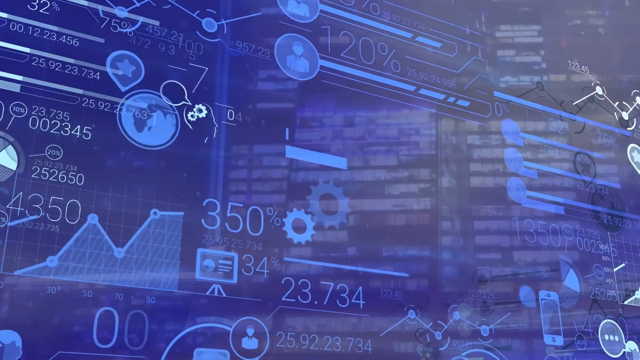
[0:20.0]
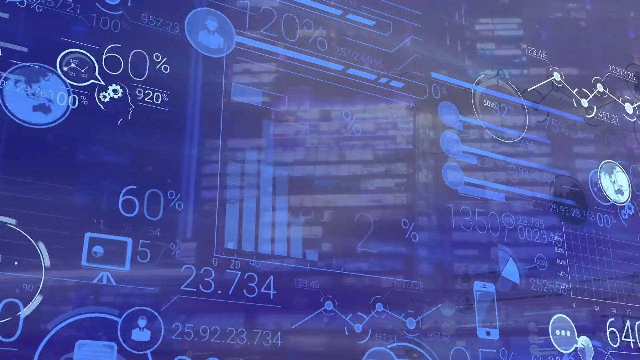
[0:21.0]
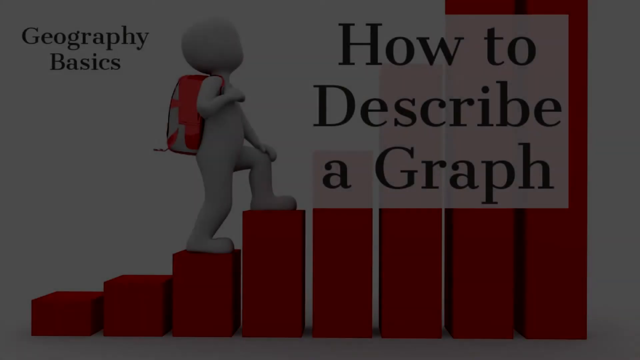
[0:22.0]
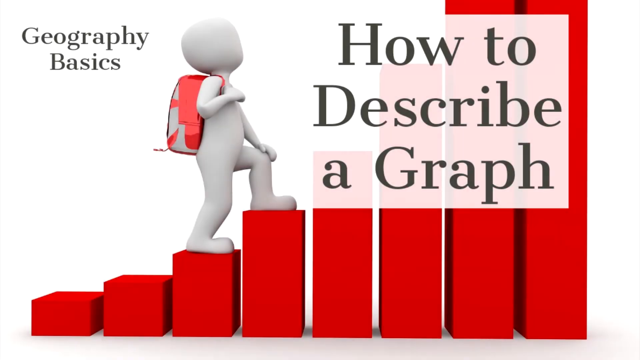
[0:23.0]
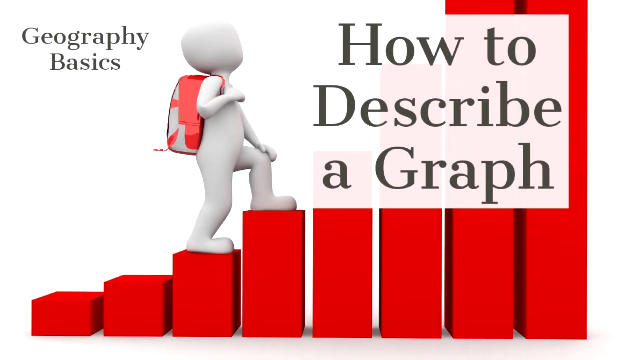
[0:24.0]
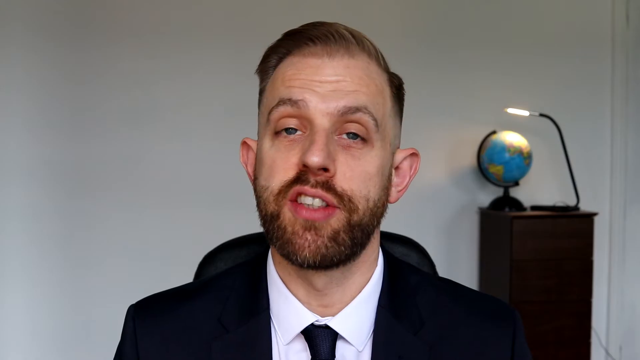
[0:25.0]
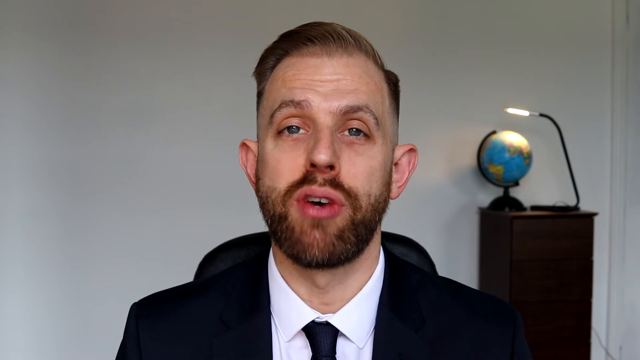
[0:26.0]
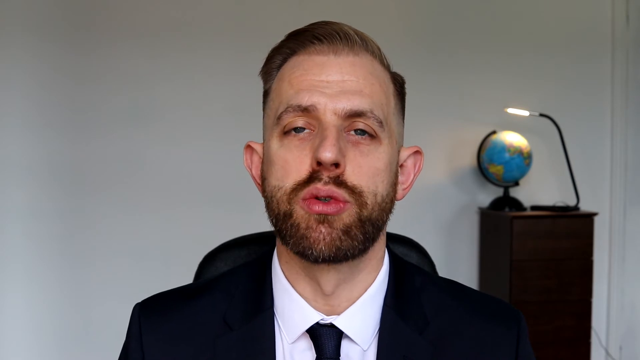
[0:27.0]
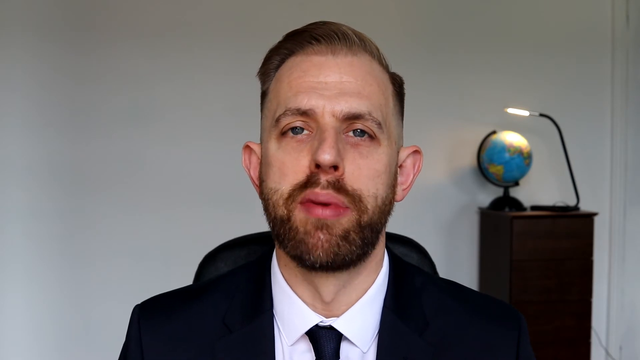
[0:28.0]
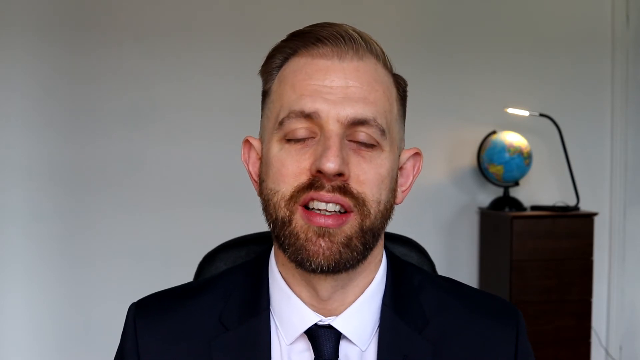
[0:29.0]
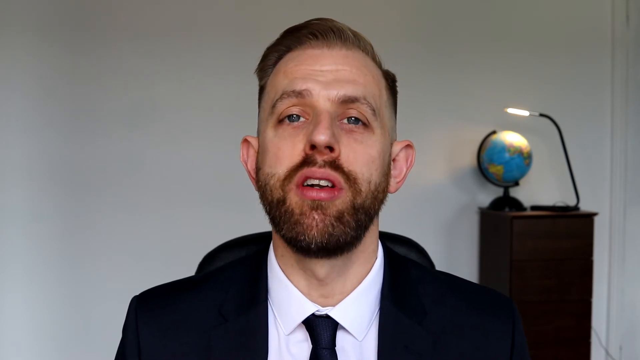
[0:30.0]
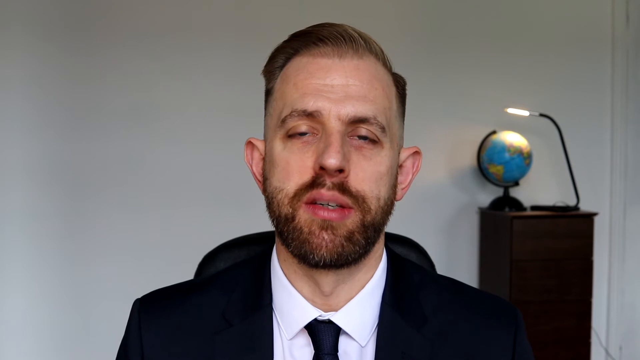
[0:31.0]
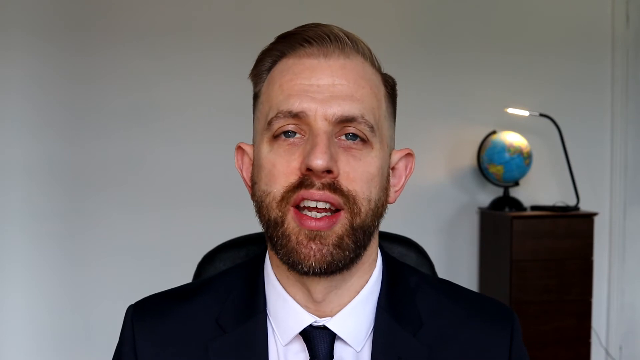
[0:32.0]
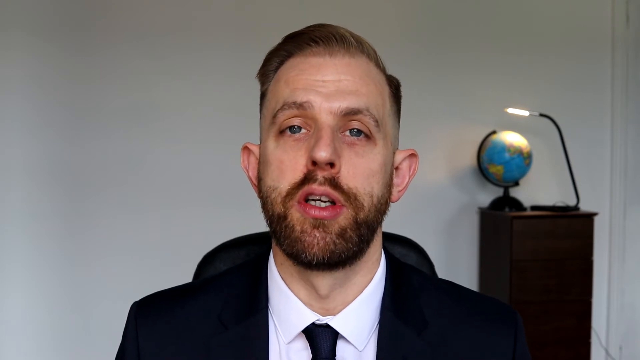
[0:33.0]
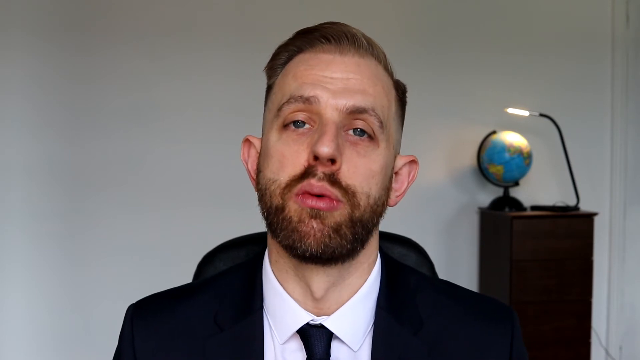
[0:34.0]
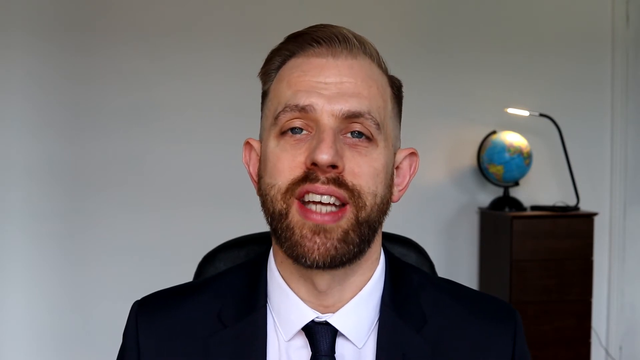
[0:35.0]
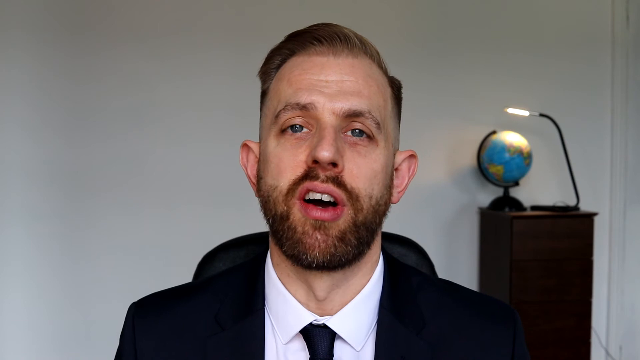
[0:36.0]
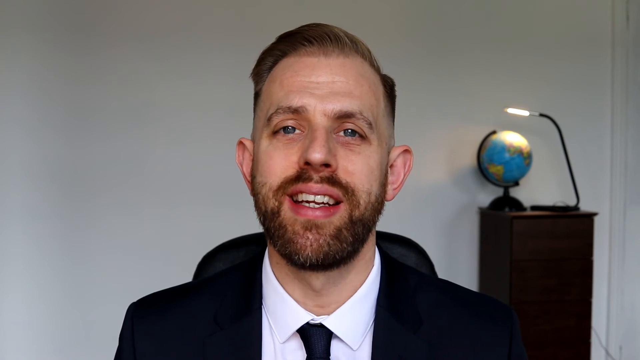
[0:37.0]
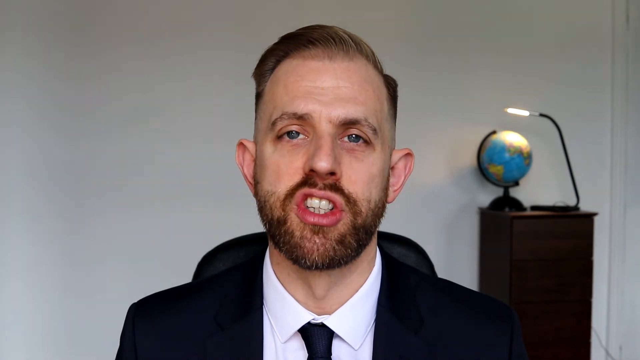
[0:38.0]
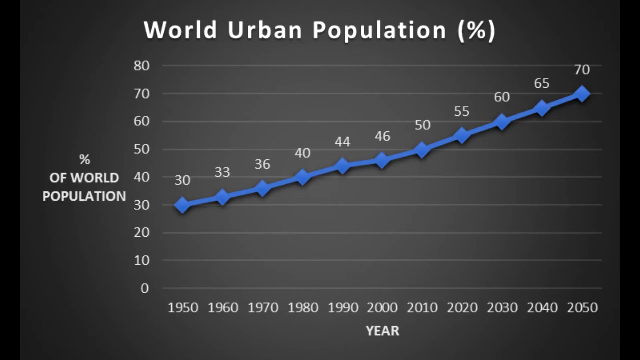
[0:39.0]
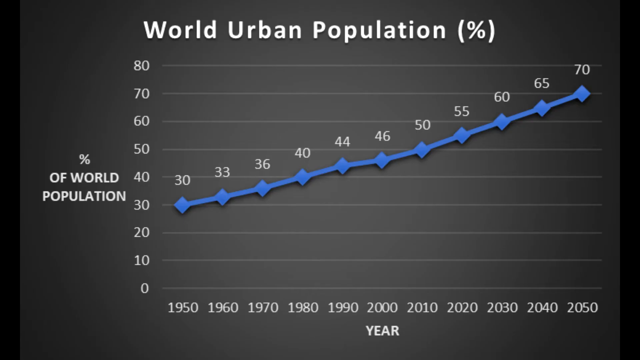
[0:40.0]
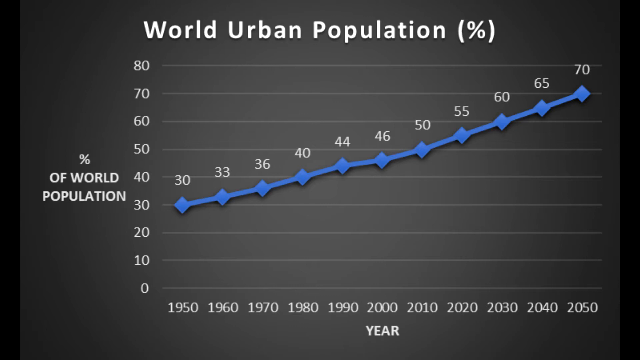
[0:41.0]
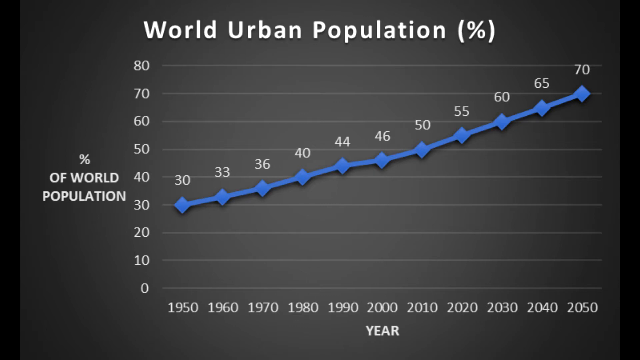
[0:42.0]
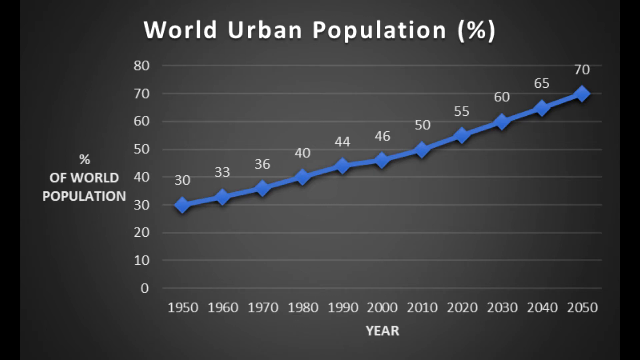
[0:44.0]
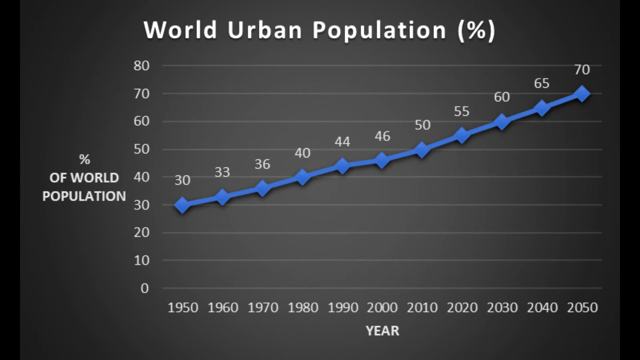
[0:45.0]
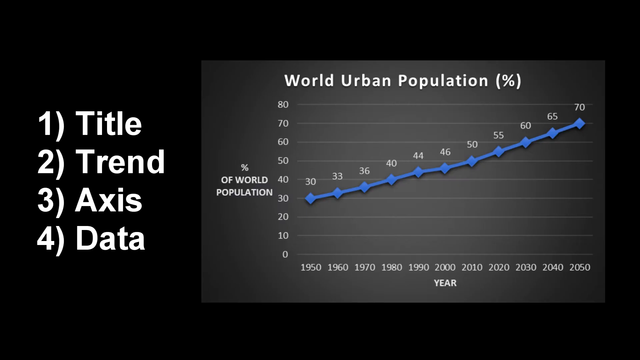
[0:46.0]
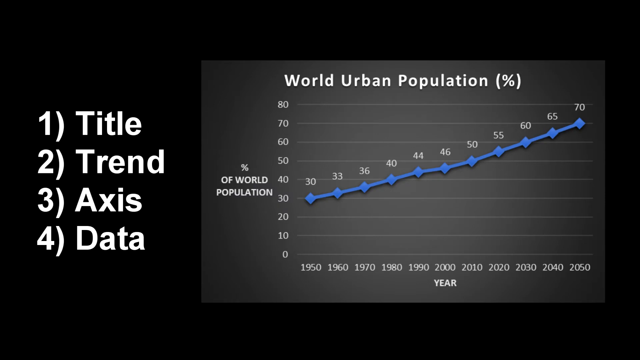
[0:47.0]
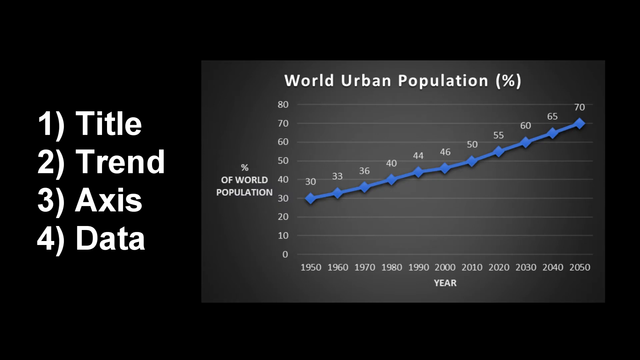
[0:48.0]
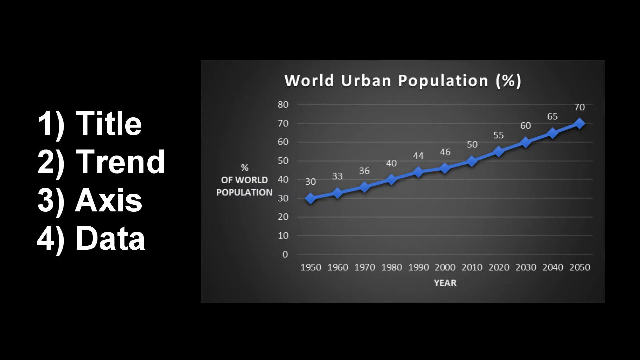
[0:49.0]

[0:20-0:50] A title reads "how to describe a graph" and "geography basics." The man talks intently into the camera, seemingly as a teacher. A chart appears labeled "world urban population" and "percent of world population," followed by the words "title," "trend," "access," and "data," apparently showing how to read the chart. The graph starts in the 1950s. It has a black background with white lettering and white numbers, white grid lines, and a blue line with blue dots going up.